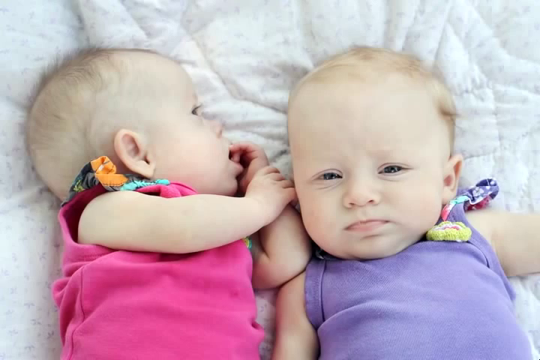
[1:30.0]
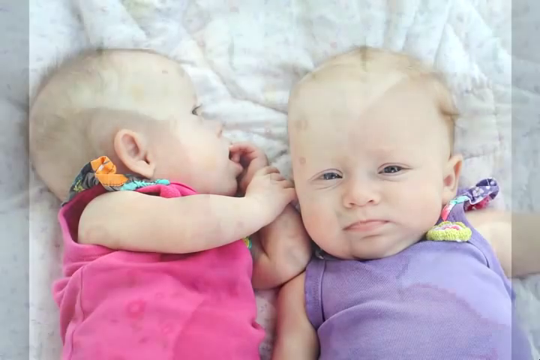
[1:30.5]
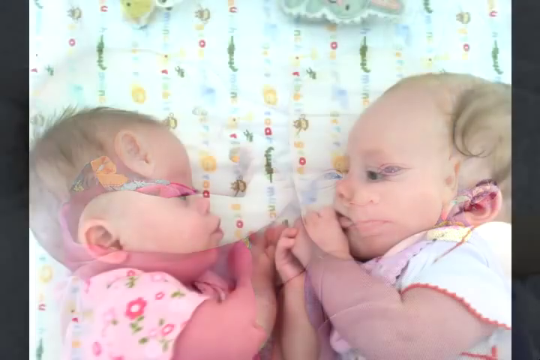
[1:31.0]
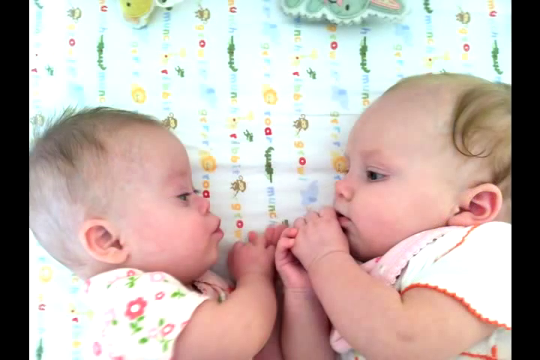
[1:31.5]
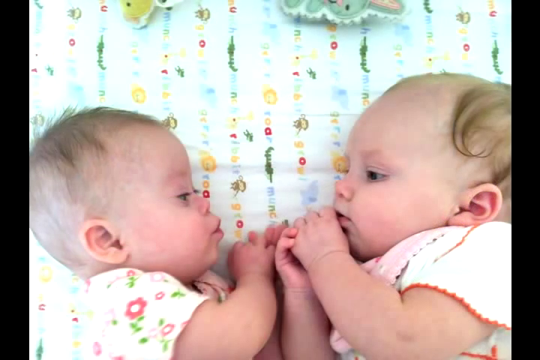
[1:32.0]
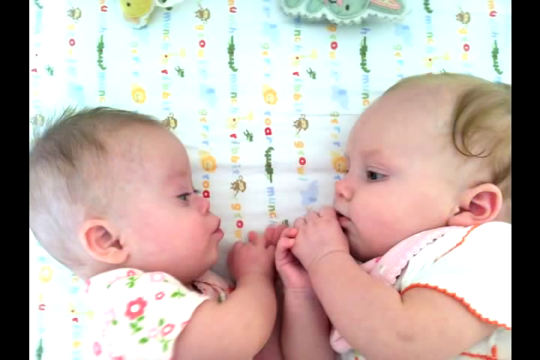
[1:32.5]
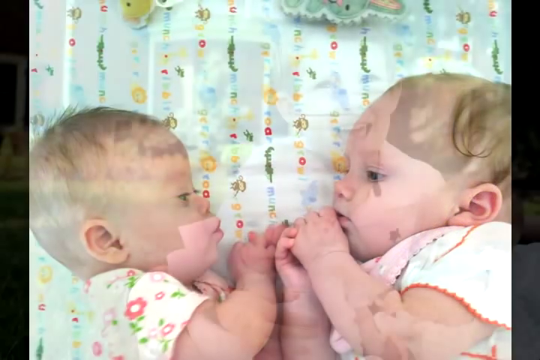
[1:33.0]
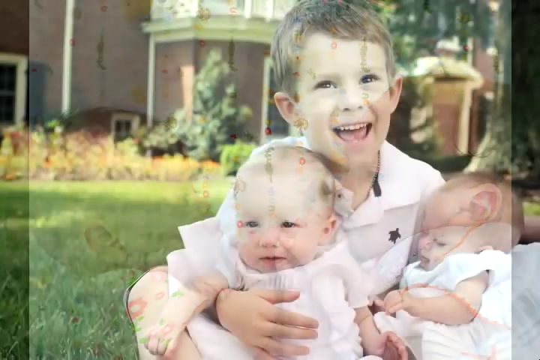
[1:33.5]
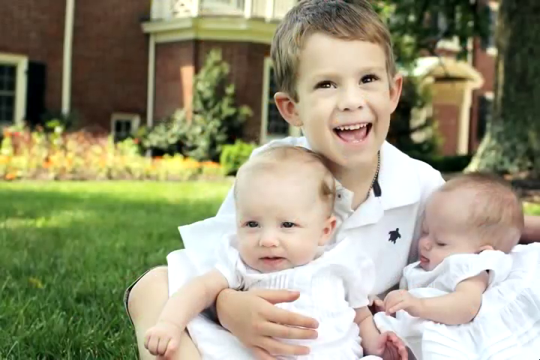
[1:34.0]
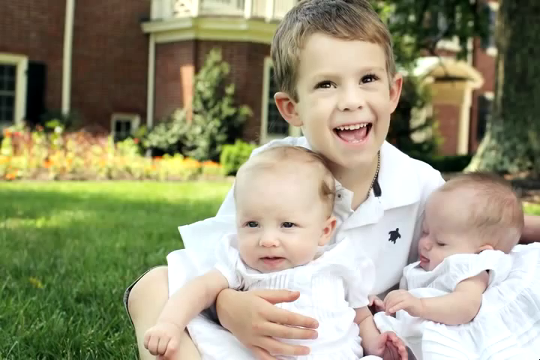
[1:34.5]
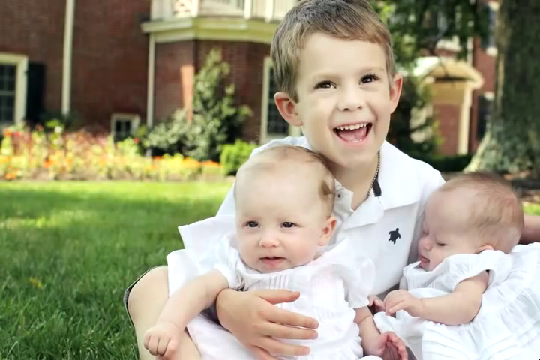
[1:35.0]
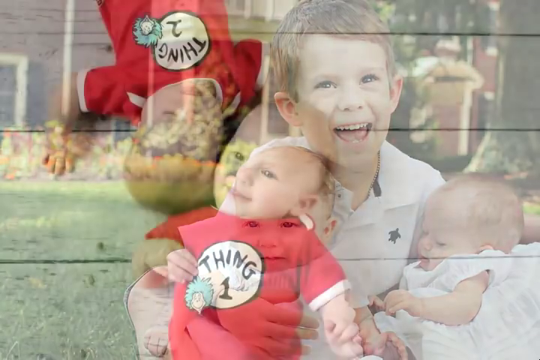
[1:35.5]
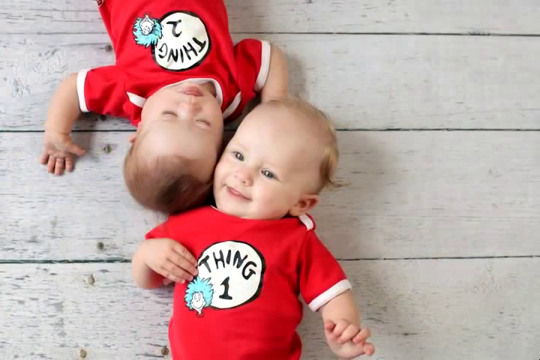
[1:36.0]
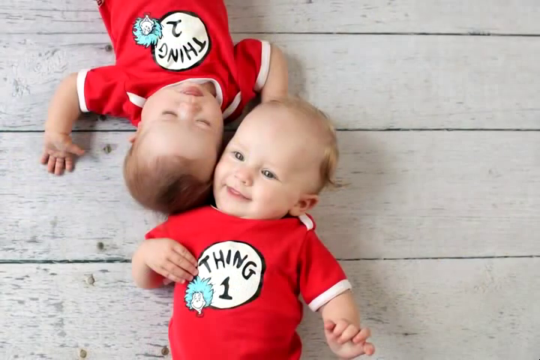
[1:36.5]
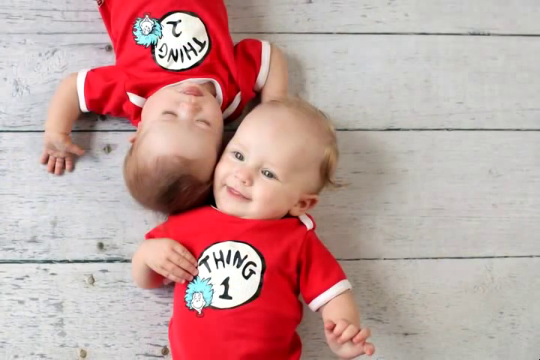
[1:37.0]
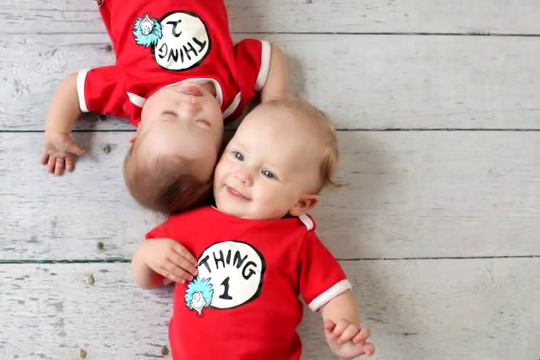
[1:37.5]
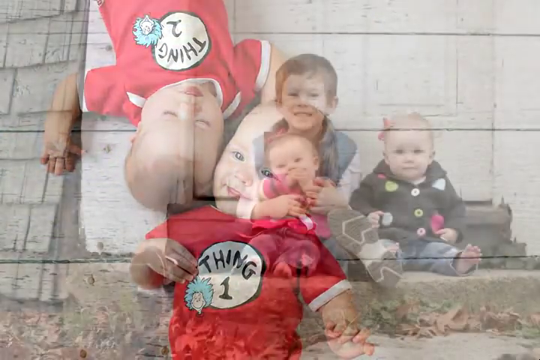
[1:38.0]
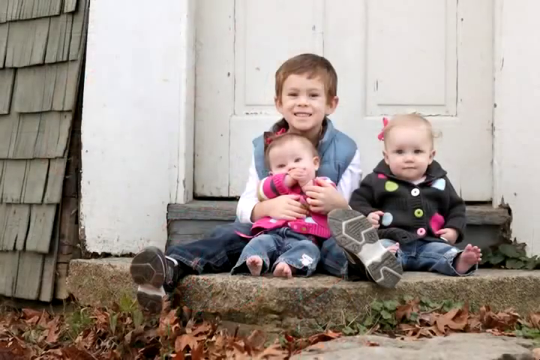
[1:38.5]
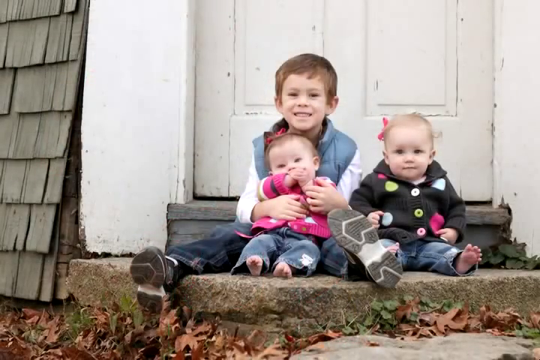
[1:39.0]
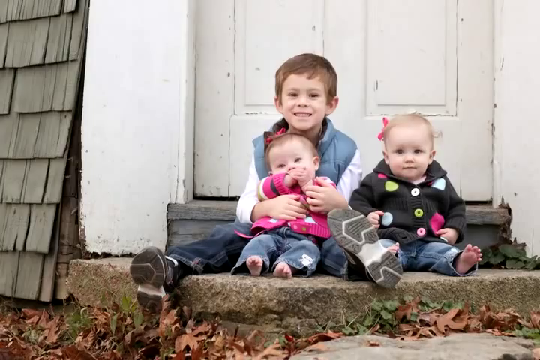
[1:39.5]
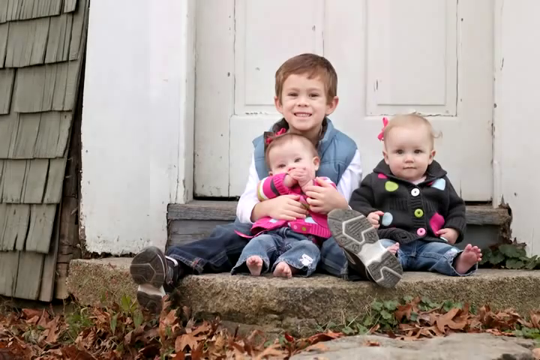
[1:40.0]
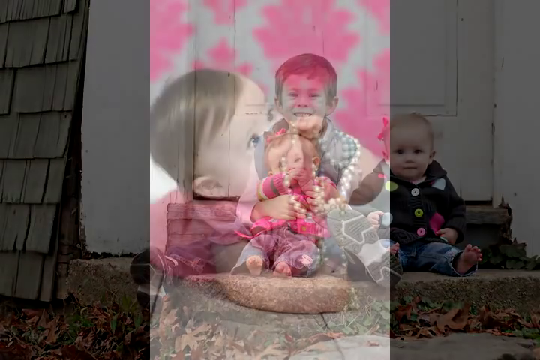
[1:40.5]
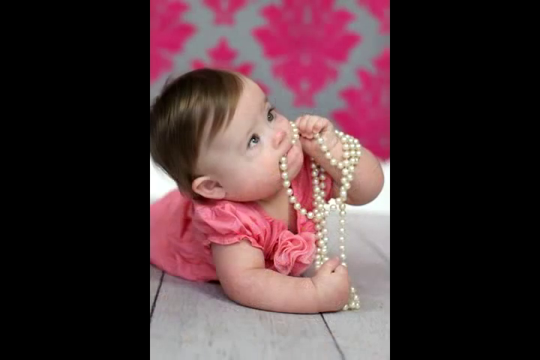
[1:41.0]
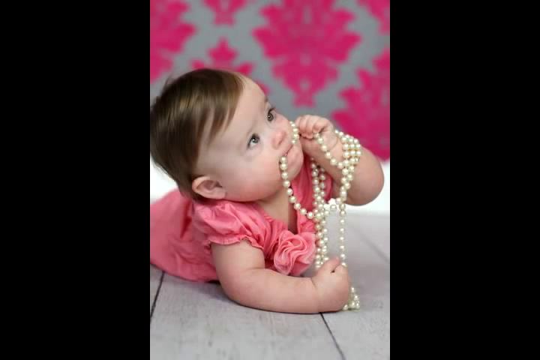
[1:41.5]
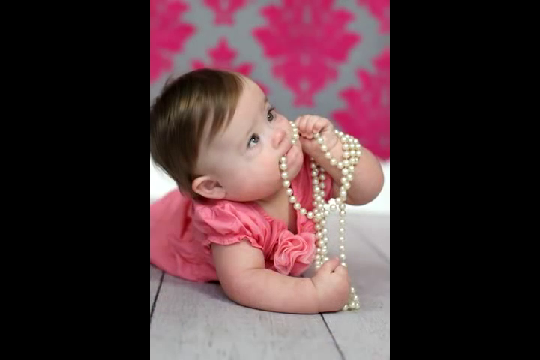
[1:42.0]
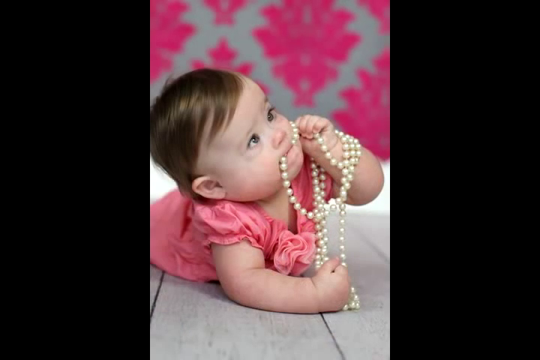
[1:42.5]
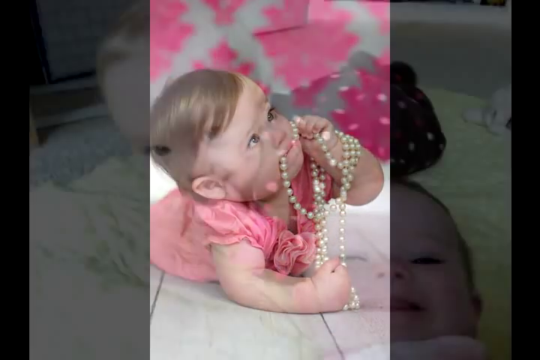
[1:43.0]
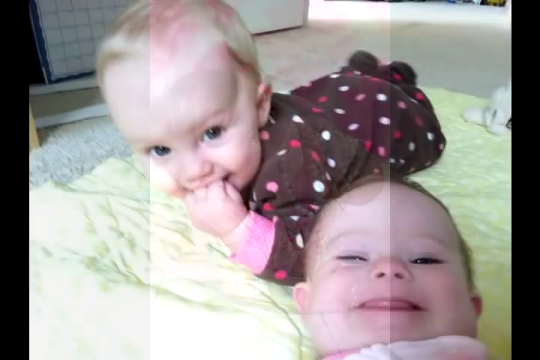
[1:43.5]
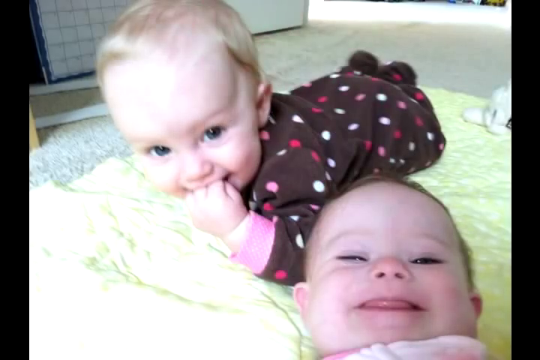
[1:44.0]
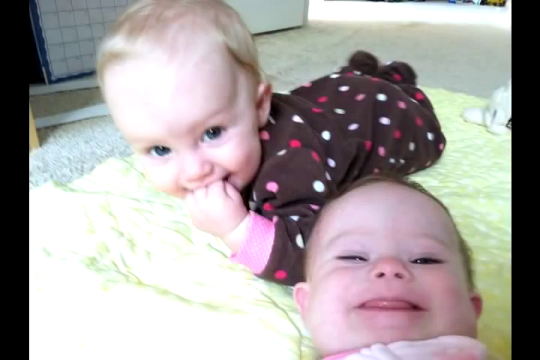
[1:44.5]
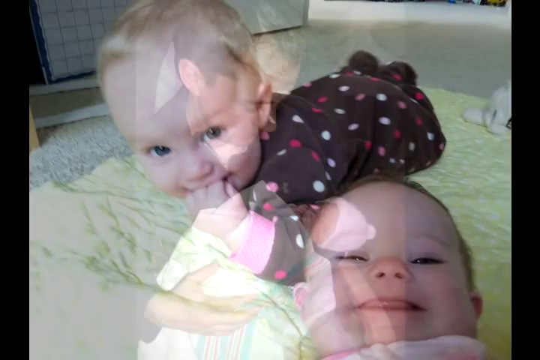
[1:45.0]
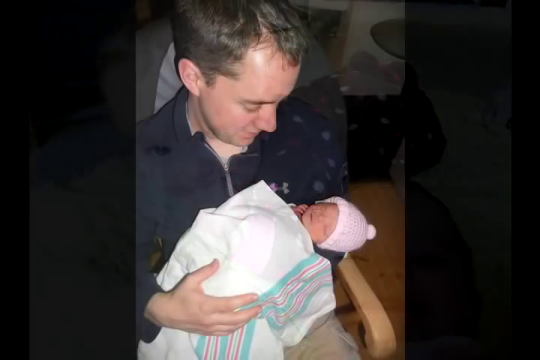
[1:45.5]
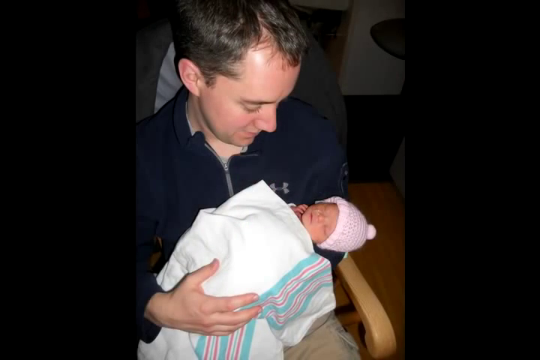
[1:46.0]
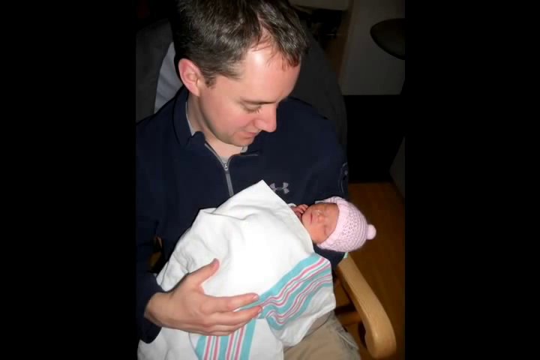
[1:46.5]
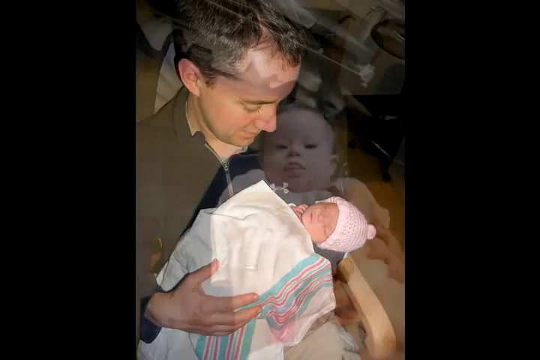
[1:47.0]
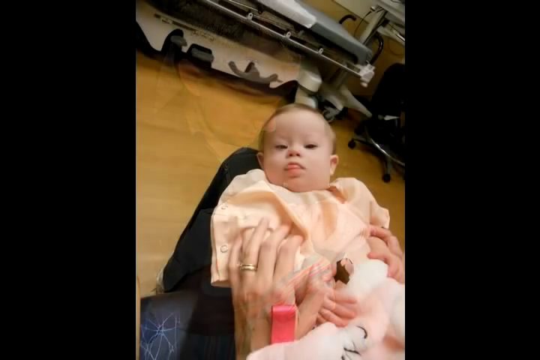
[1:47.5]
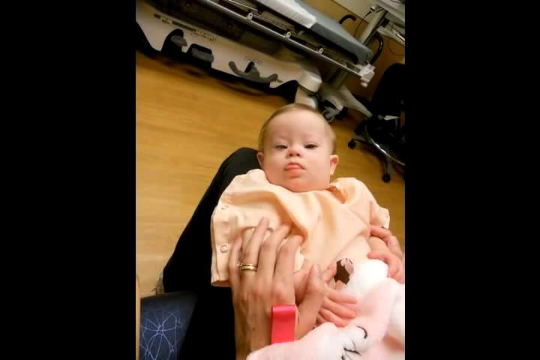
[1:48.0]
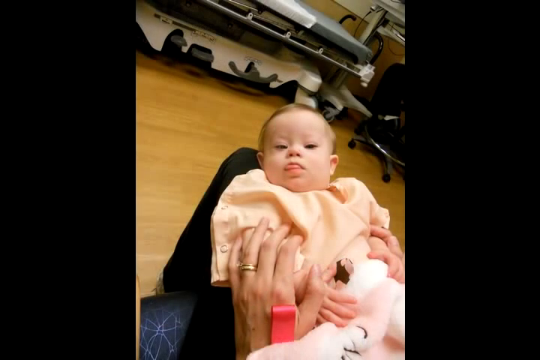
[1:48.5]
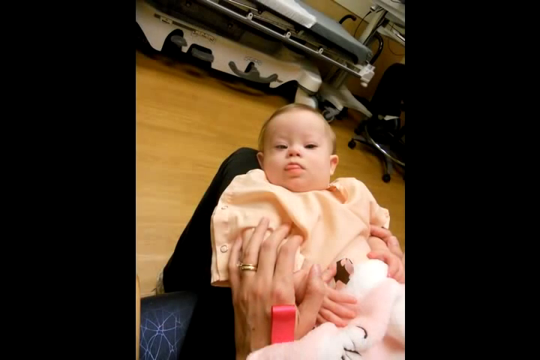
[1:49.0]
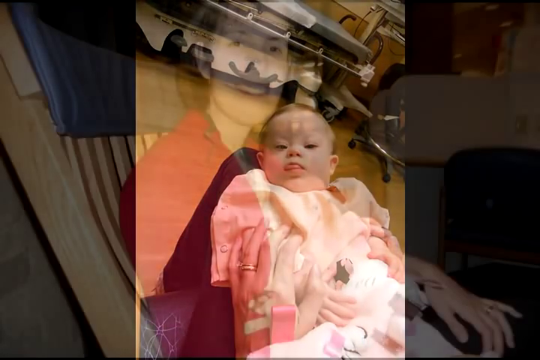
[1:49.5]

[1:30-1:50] A picture of the twins shows one in a purple outfit and the other in pink; one looks straight at the camera while the other looks at her sister. Another picture shows both twins looking at each other. Next, the twins appear with their brother: one twin is asleep while the other has her eyes open, and the brother has his mouth open and is smiling, with a brick house in the background. The twins are then shown lying on a floor in outfits, one reading "Thing 1" and the other "Thing 2," with their heads next to each other and their bodies stretched out opposite each other. Another picture shows their brother sitting with his sisters, both awake; they appear to be in winter or fall clothes, with a white door and some shingles of the building in the background. They sit on a step bundled up in their coats, but the twins are barefoot. A picture of just Nora follows: she wears a pink dress, has pearls wrapped around one of her arms and is sucking on the pearls, against a pink and gray background. Then come a picture of the twins, a picture of the father holding one of the twins, a picture of Nora, and a picture of the mother sitting in a chair holding Nora.